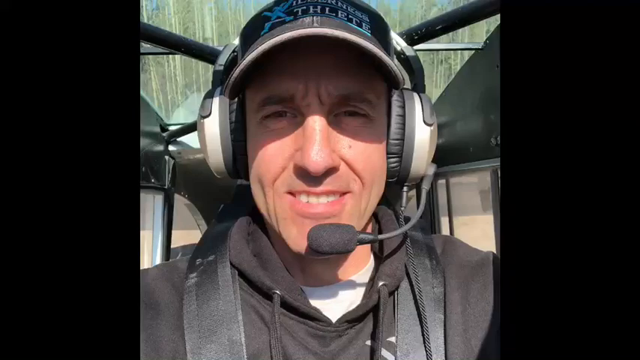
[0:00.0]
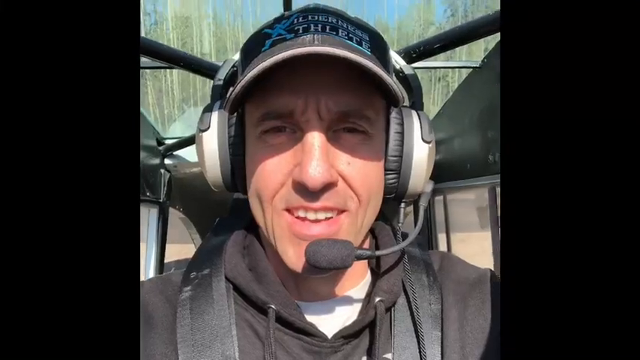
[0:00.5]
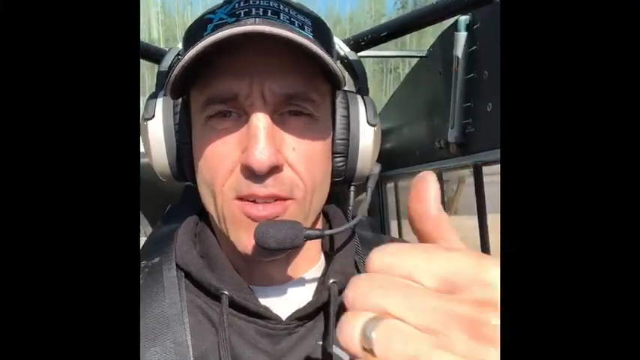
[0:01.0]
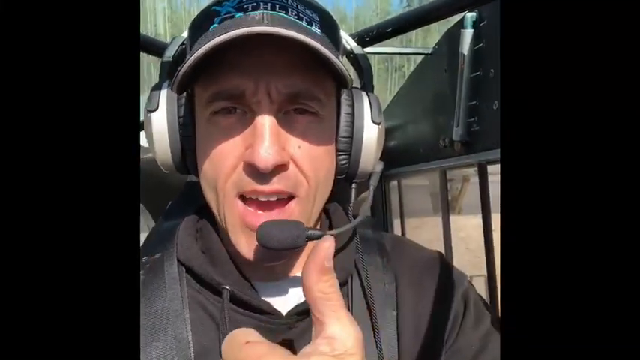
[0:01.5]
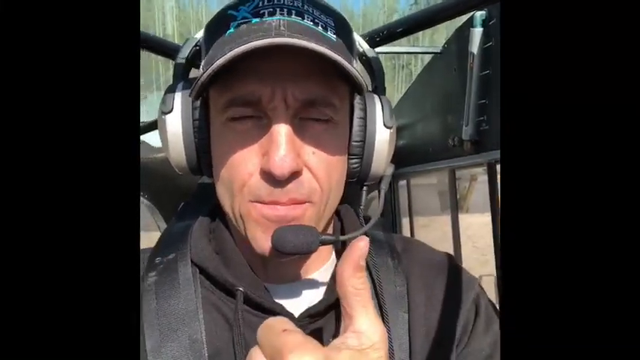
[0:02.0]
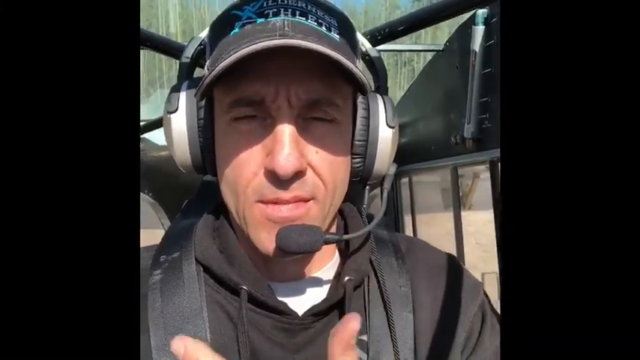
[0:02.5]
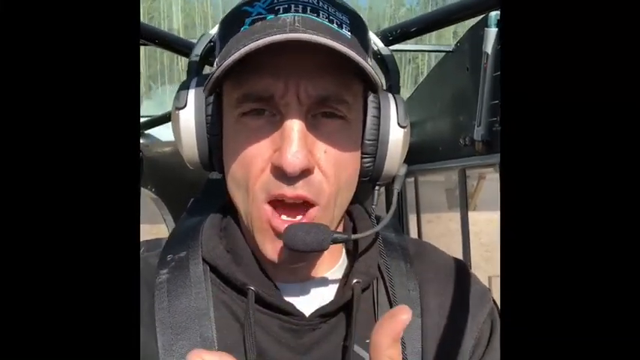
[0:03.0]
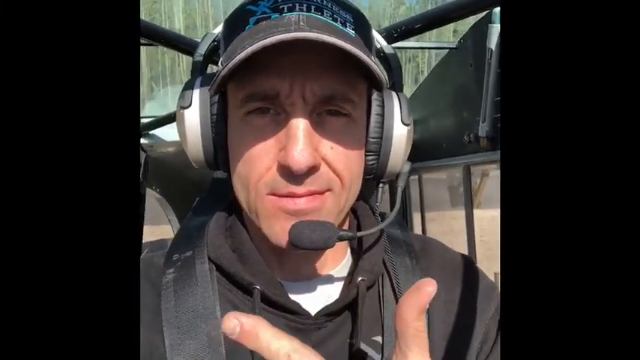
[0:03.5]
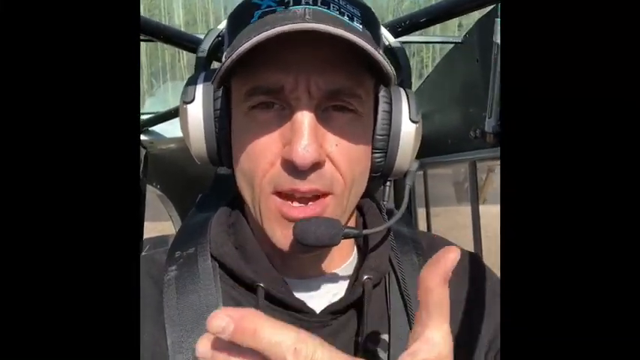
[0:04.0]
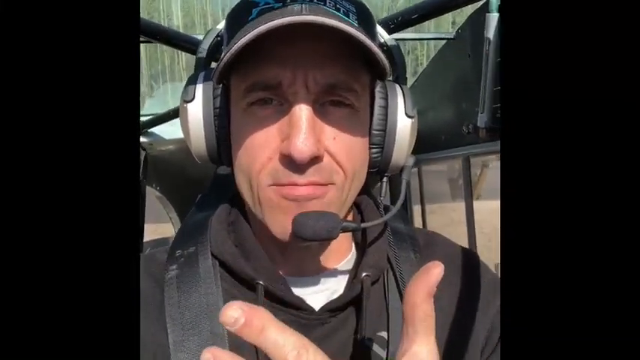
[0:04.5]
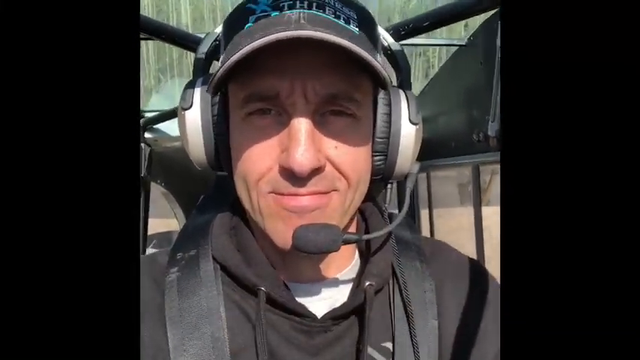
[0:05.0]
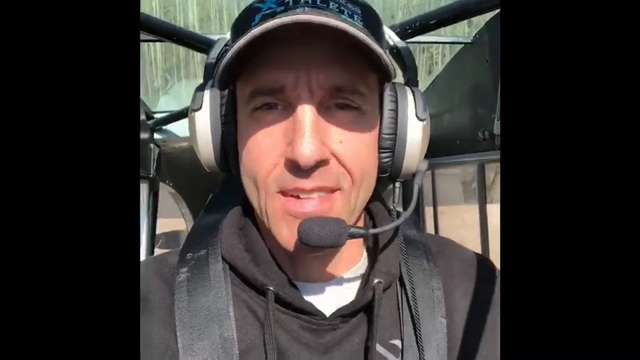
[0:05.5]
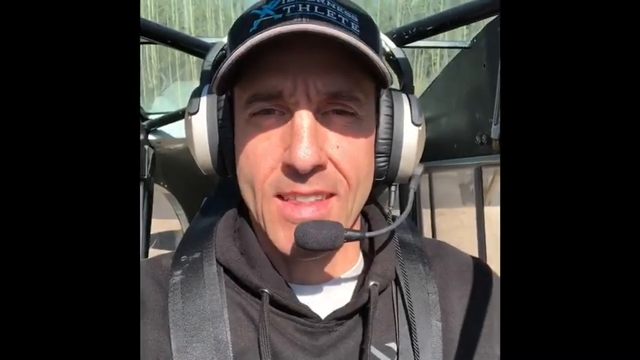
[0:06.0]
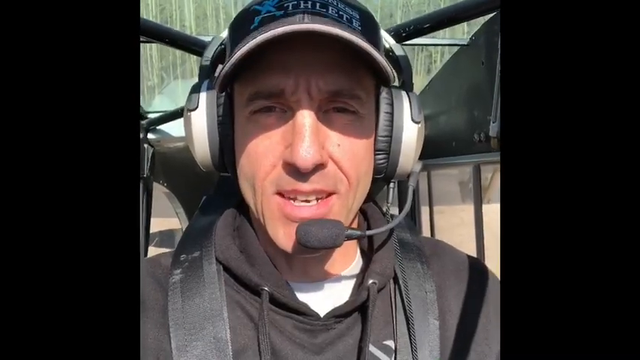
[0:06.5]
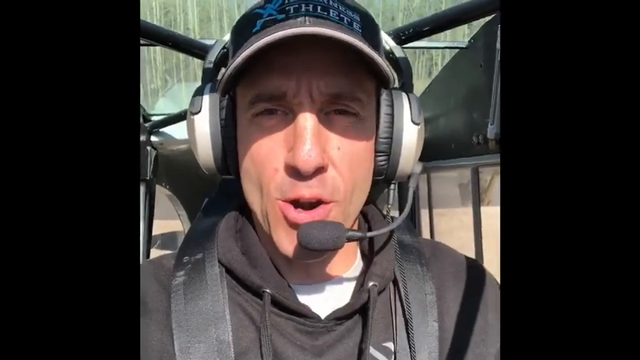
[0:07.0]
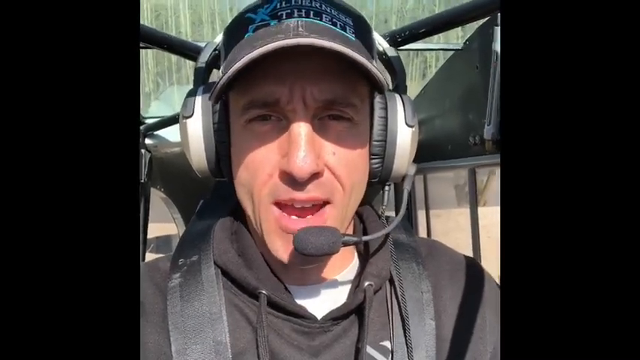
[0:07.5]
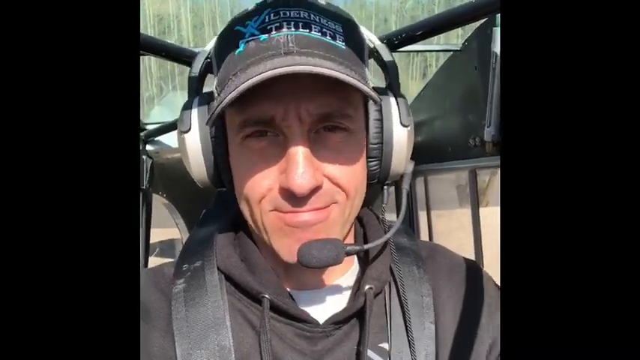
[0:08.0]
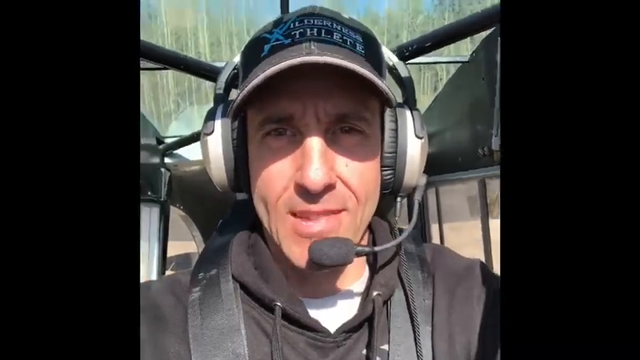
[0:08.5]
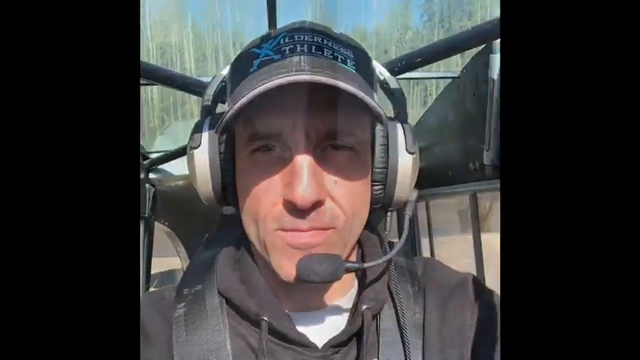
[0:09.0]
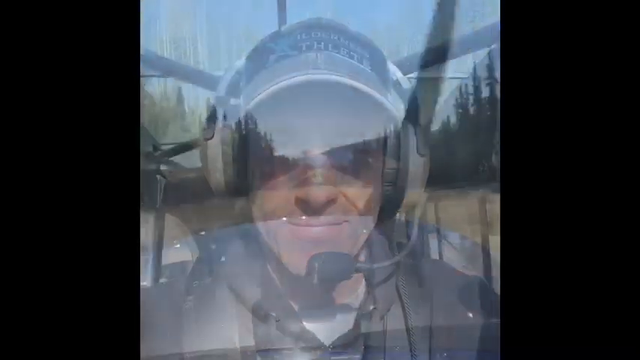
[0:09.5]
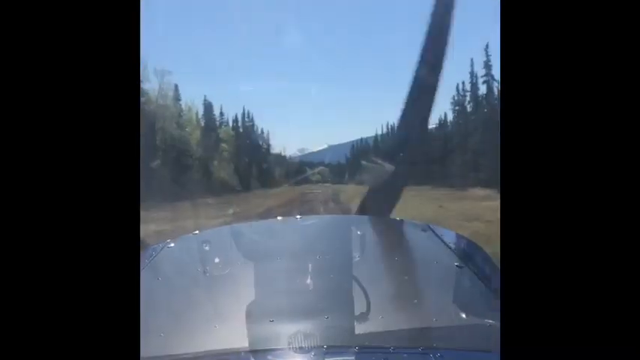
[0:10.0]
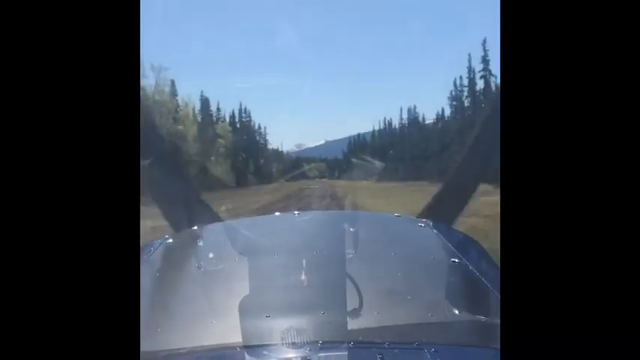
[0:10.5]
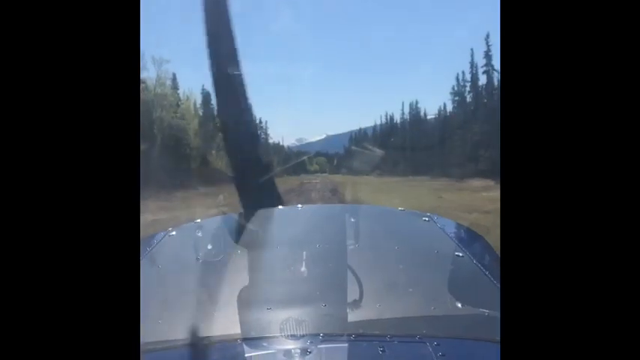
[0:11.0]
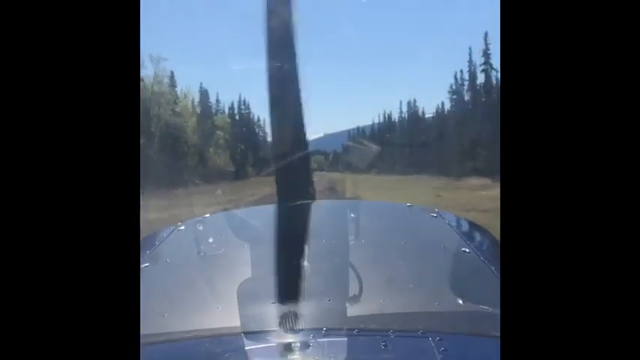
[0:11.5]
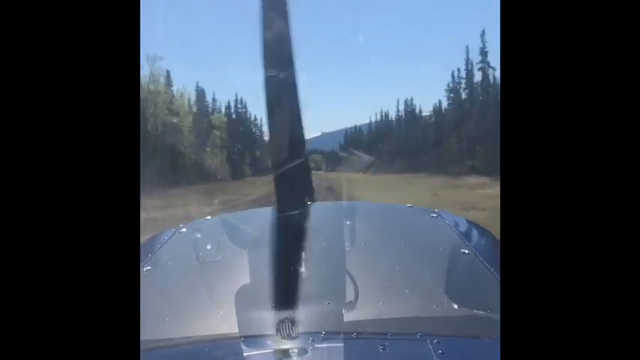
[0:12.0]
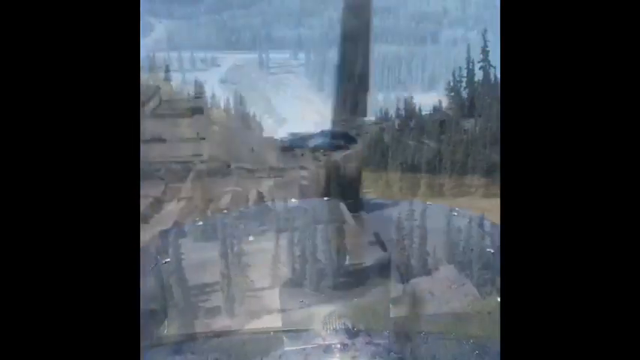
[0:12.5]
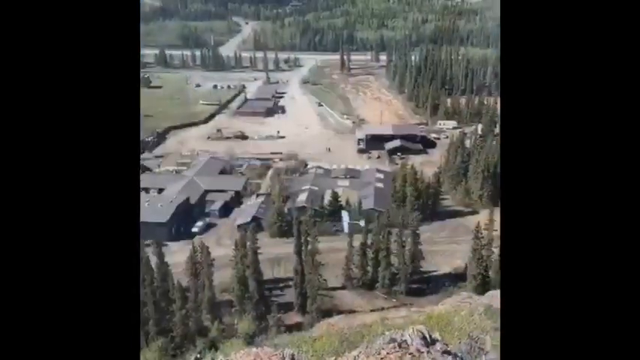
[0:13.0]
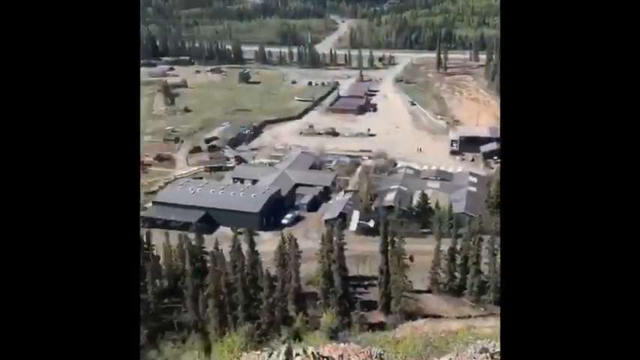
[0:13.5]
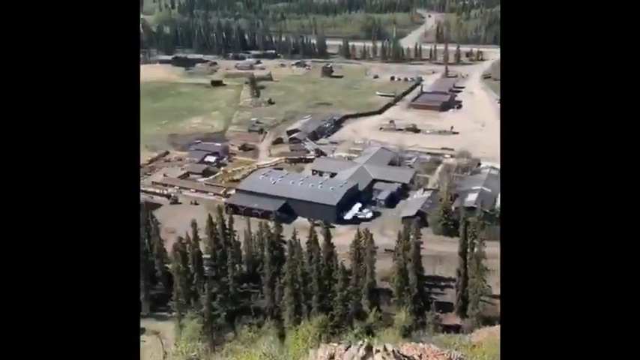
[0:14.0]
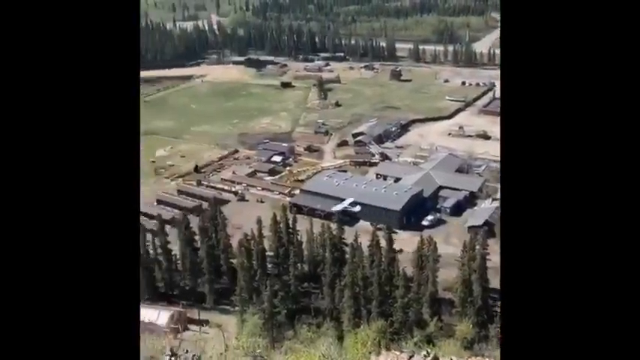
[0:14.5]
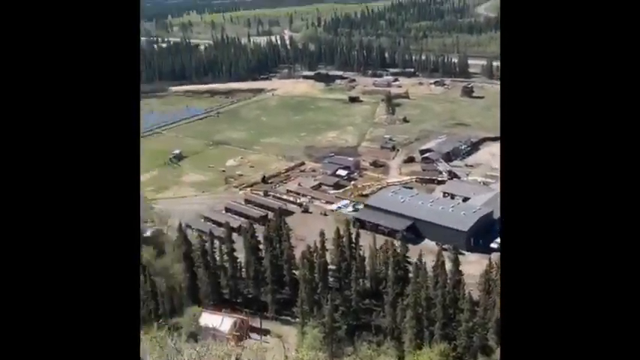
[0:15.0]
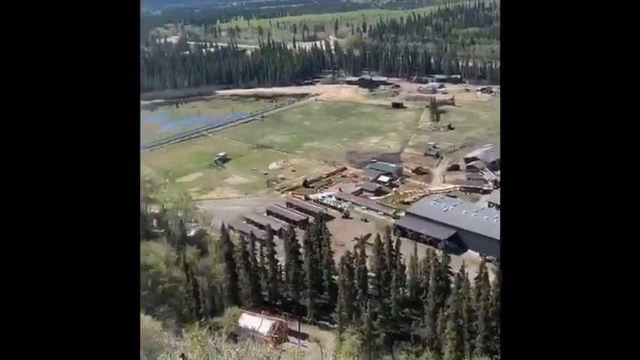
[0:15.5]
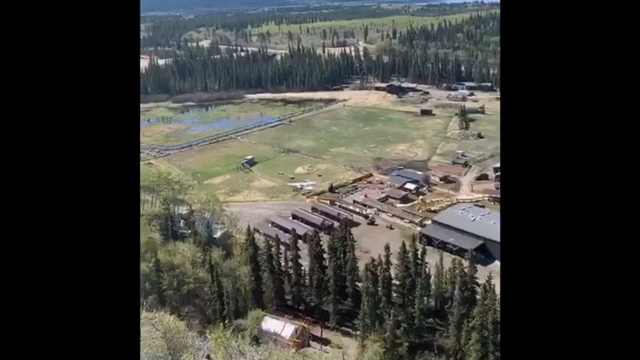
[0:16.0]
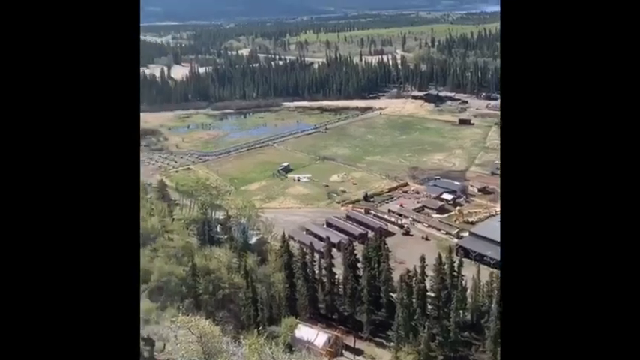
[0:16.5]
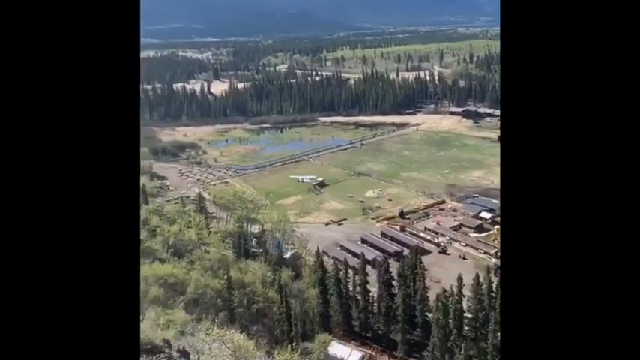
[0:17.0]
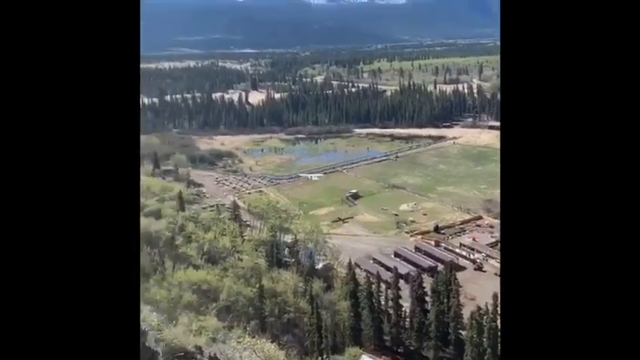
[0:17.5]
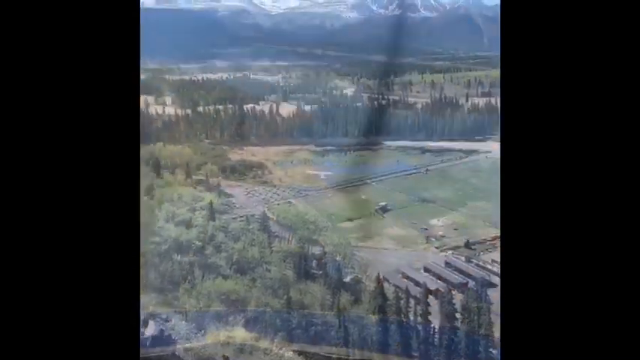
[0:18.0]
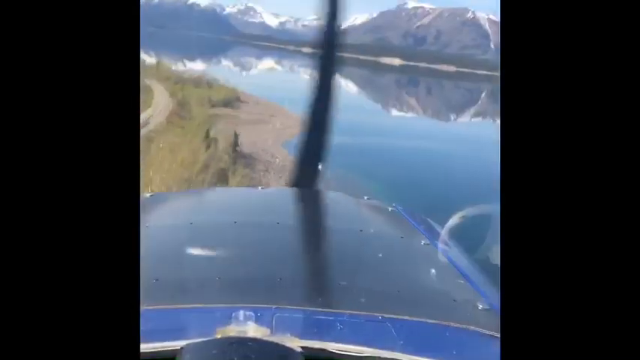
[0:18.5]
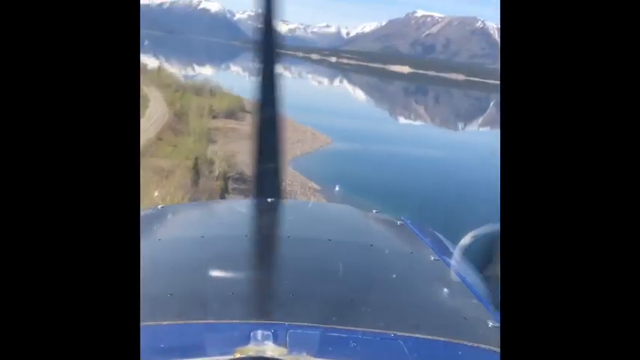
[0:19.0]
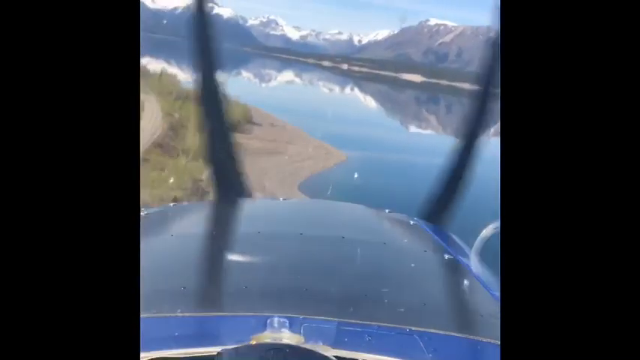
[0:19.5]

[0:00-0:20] A man talks, wearing a black jacket and a black hat, with ear-protection headphones whose microphone curves down in front of his mouth. Behind him are the seat and inside of a plane, and he is visible only from the shoulders up. The camera jiggles a lot as he speaks. He brings his left hand up into view and gives a thumbs up, then opens his fingers so the back of his hand faces the screen and gestures toward the screen with it. He lowers his hand and the image fades out. Next comes the view from the cockpit of a plane, with the propellers spinning in front of the view. Then the top of a plane is seen flying across an open area with buildings; the plane is very tiny and the view is from very far ahead. The camera pans toward the left, showing more of the area, and as the camera flies, the airplane flies toward the left side of the screen.